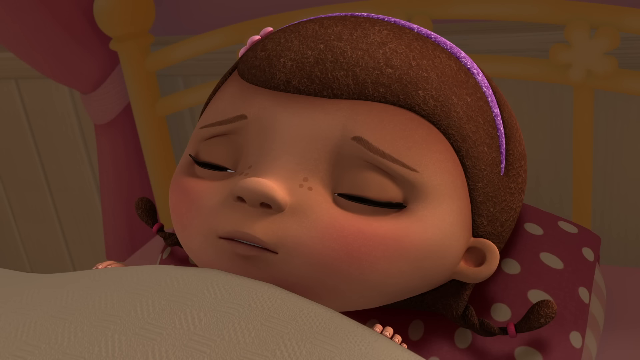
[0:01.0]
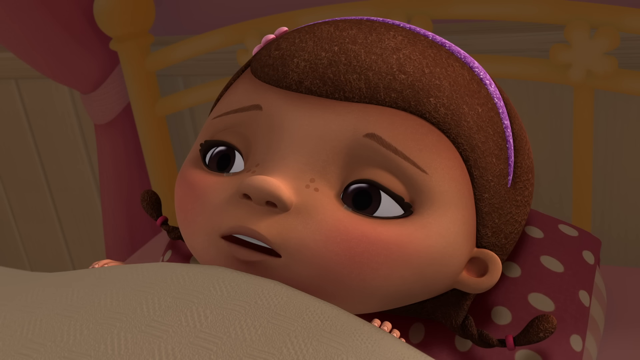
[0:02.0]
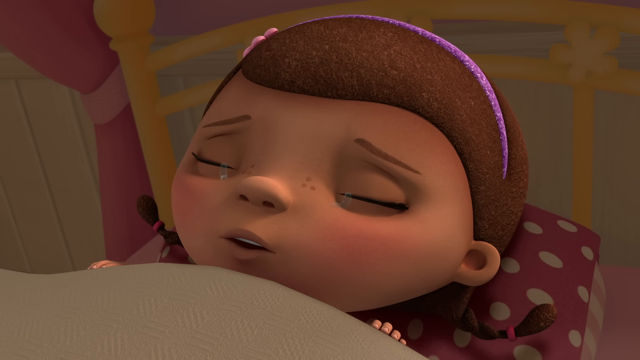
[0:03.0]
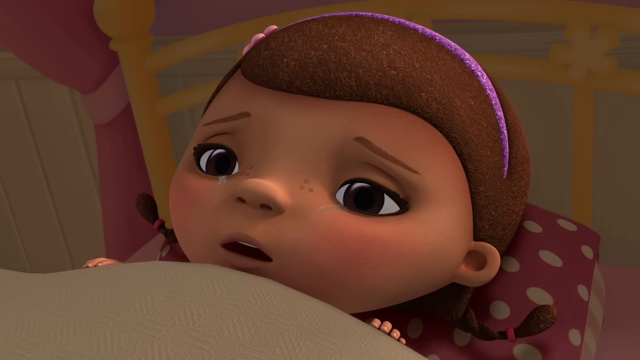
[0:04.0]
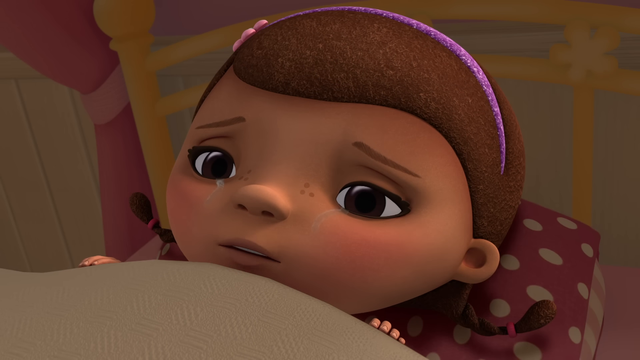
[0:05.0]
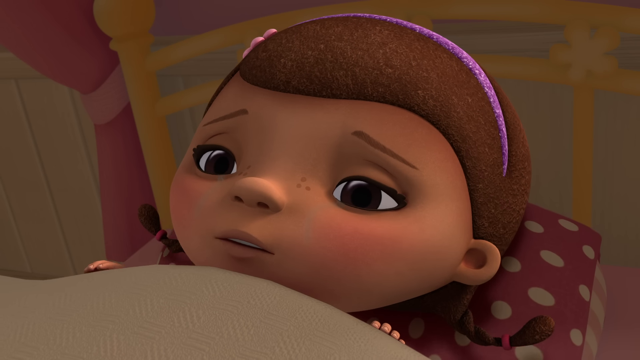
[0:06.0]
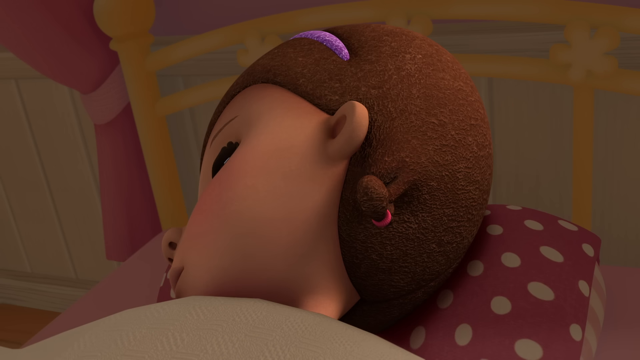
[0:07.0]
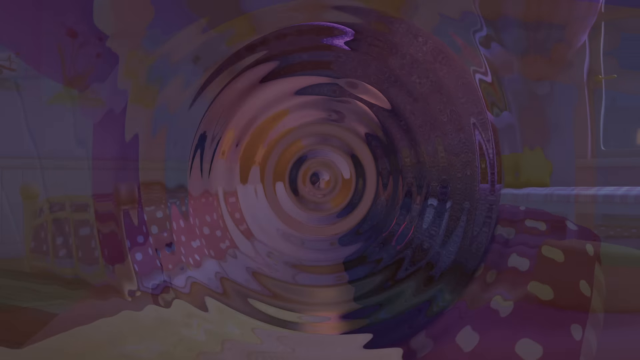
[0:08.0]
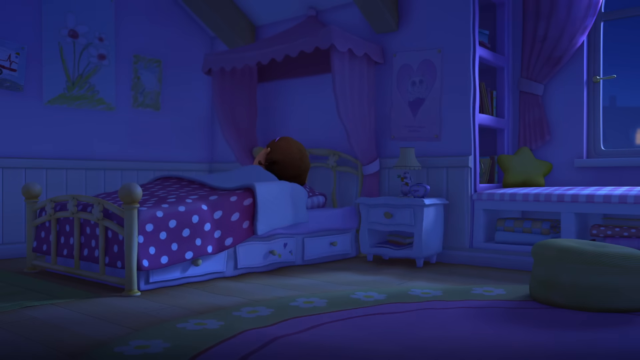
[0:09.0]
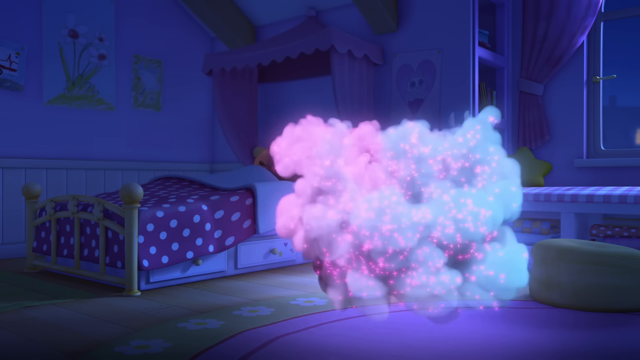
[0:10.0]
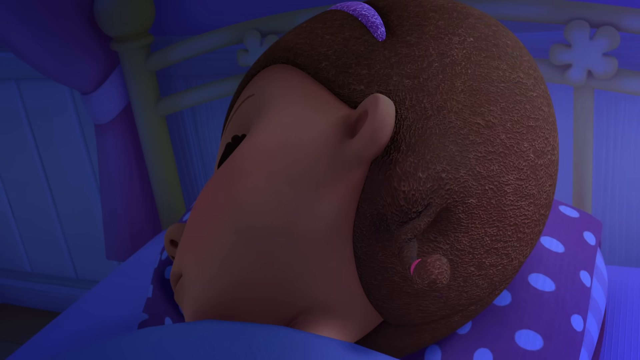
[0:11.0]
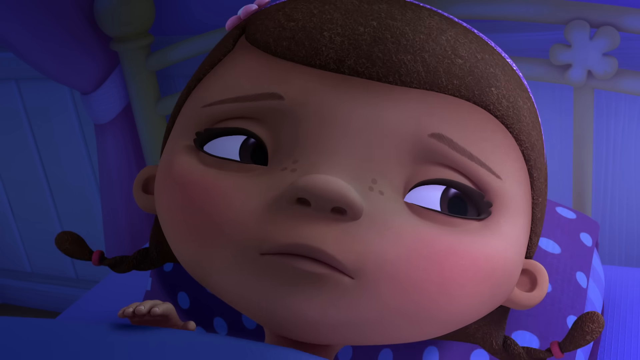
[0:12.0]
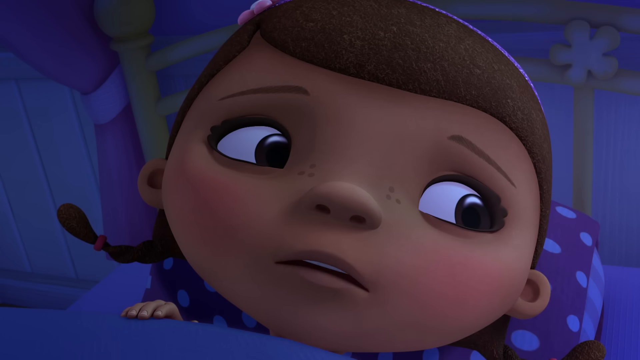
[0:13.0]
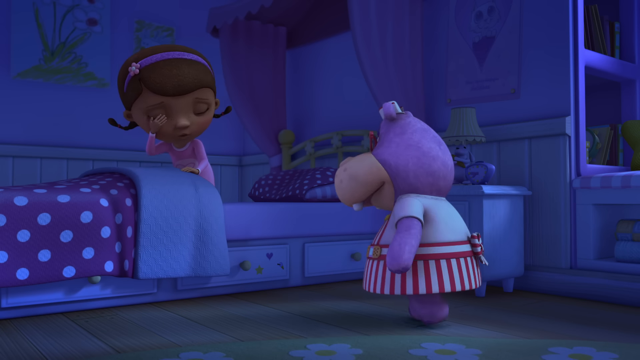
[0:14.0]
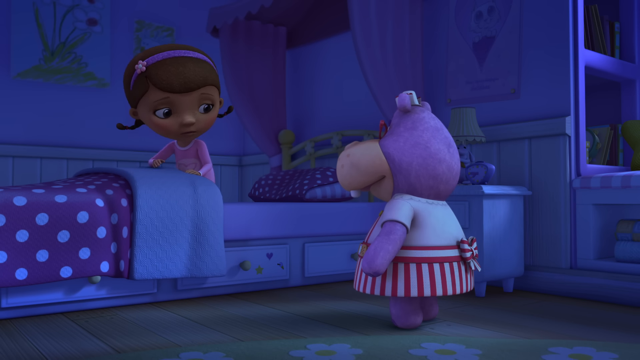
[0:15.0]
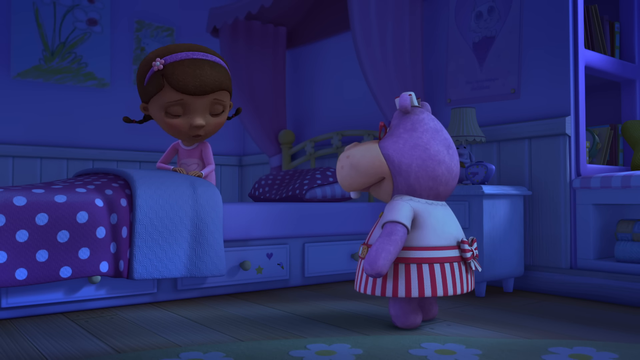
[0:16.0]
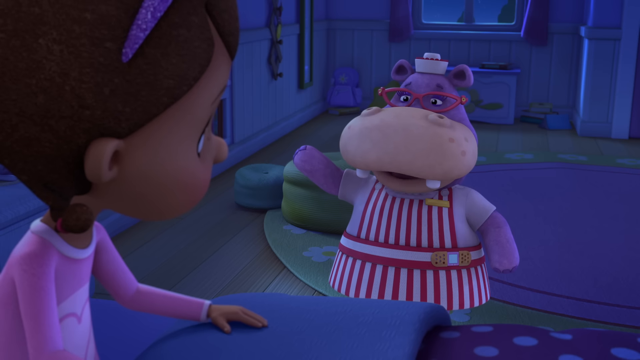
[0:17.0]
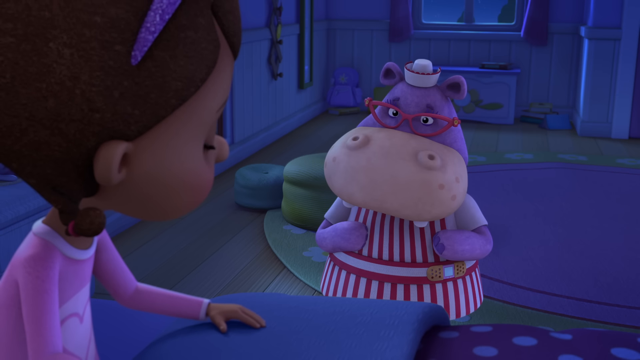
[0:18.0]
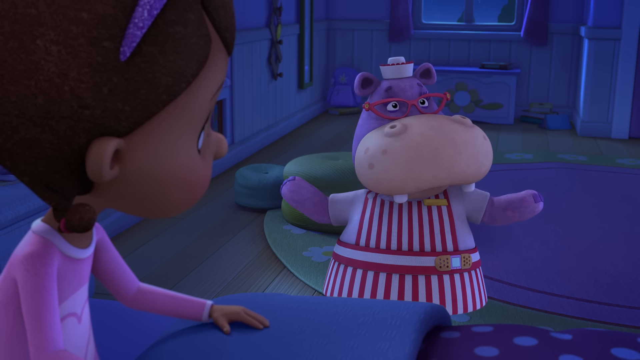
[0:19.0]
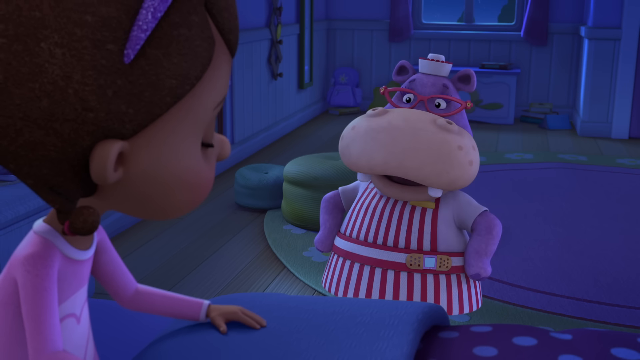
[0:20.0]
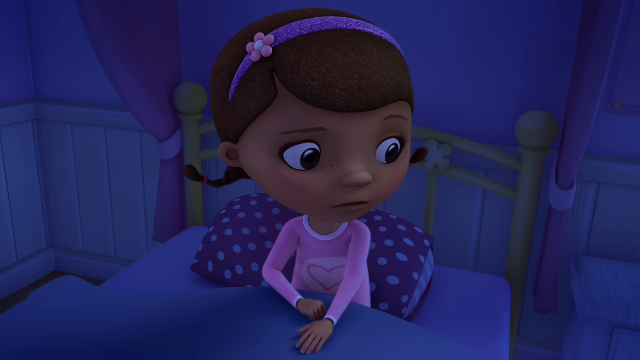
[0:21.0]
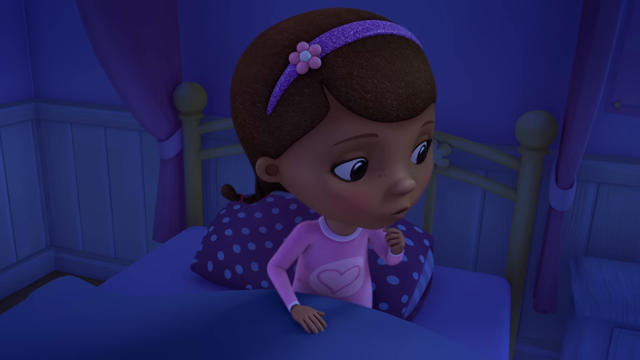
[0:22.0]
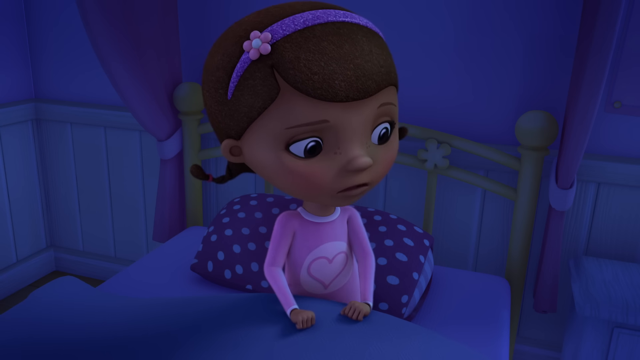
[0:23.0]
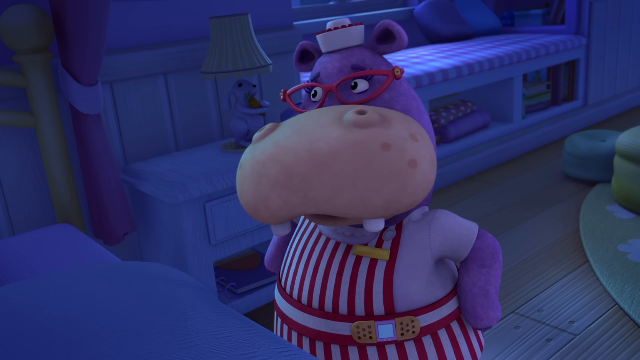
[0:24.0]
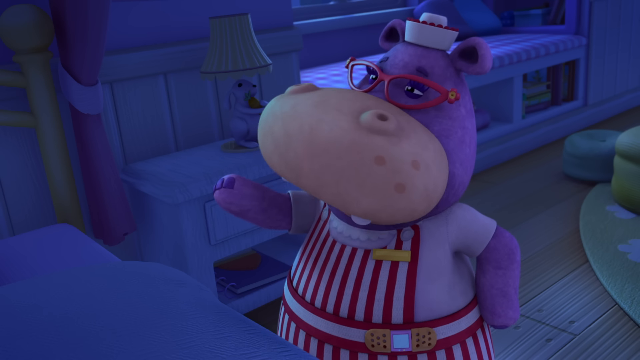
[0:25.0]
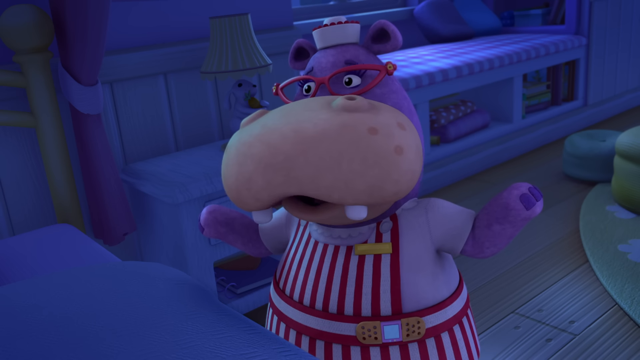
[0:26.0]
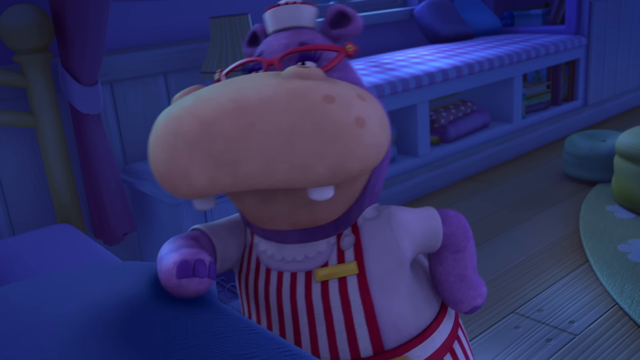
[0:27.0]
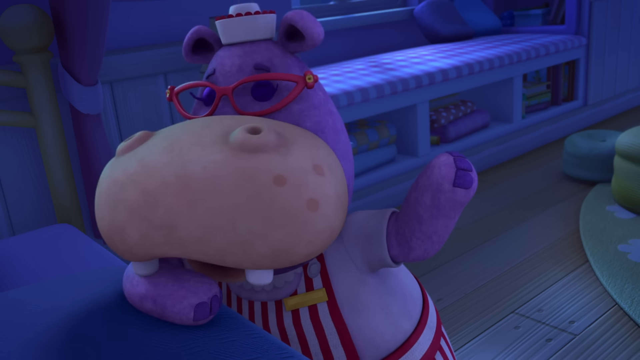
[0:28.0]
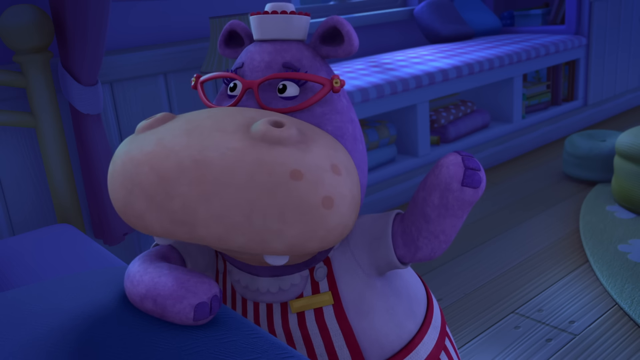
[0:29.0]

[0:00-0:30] This is a CGI-style animation, not a cartoon. A little girl with brown hair and a purple hair ribbon wakes up and turns her head, and smoke appears. The room becomes more blue, and a hippo appears wearing a red and white outfit, with a purple face and red glasses. The room shows a little bit of red. Once she wakes up in this dream sequence and the smoke and the hippo appear, the room has more of a blue hue, and the outside looks the same color. There is a purple carpet, a little bit of wood, a shelf, and a lower shelf holding what look like bedsheets, and pillows.